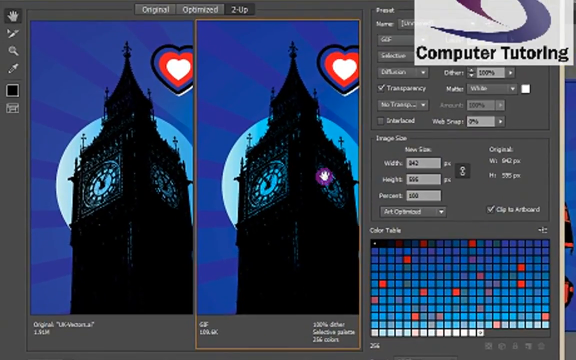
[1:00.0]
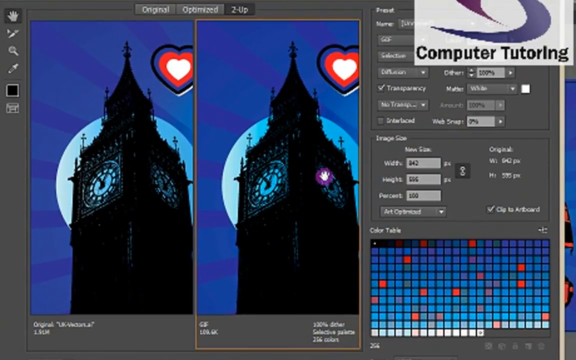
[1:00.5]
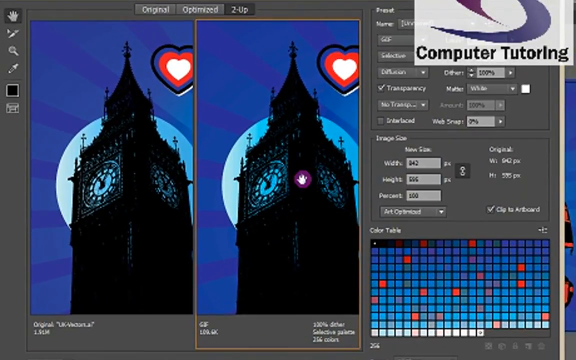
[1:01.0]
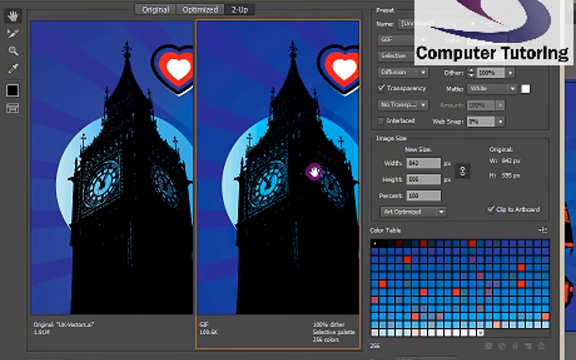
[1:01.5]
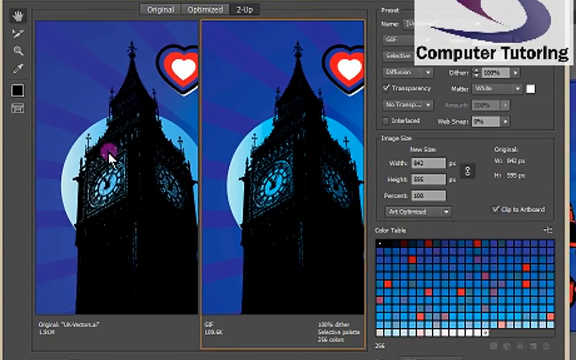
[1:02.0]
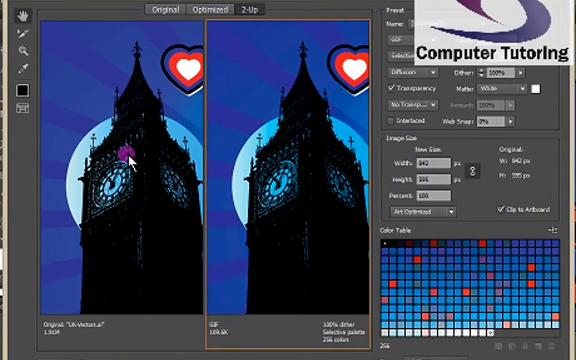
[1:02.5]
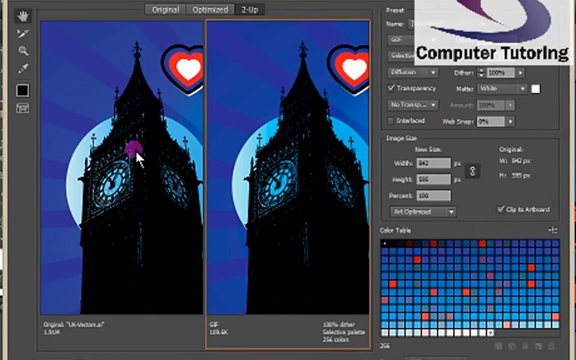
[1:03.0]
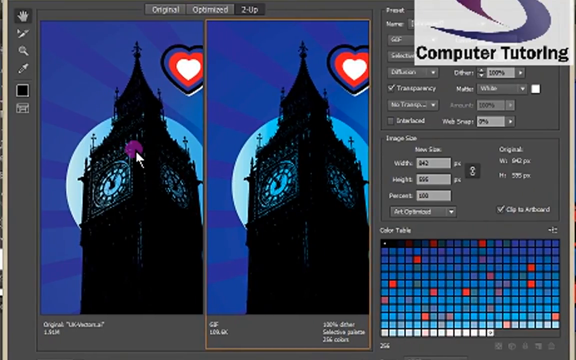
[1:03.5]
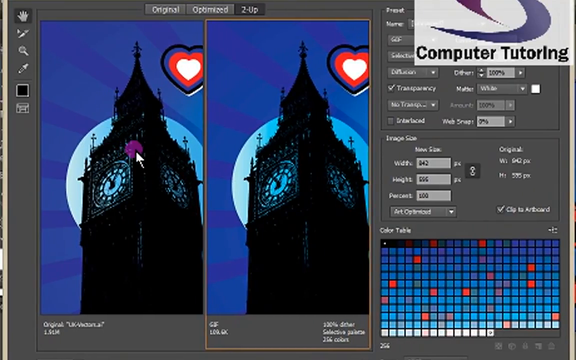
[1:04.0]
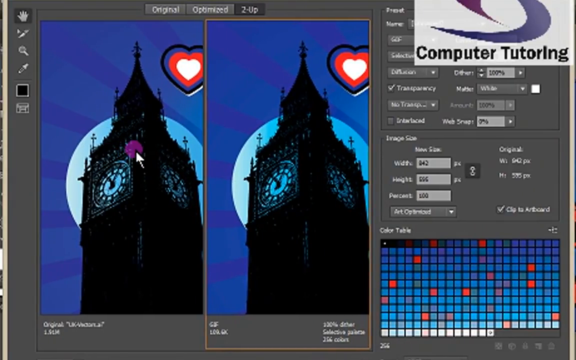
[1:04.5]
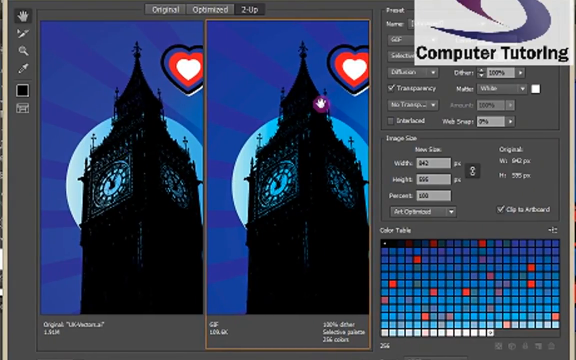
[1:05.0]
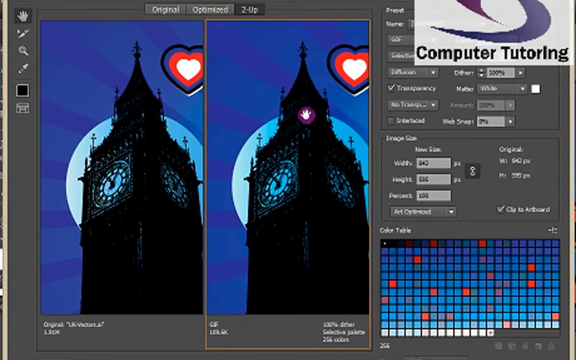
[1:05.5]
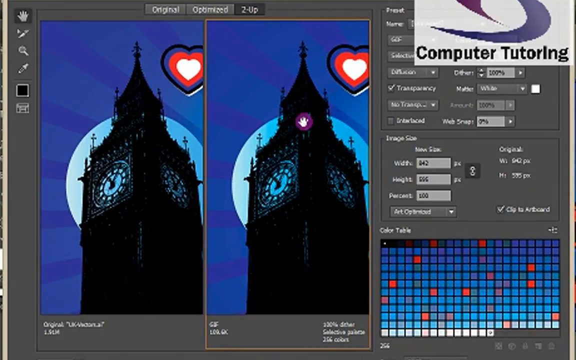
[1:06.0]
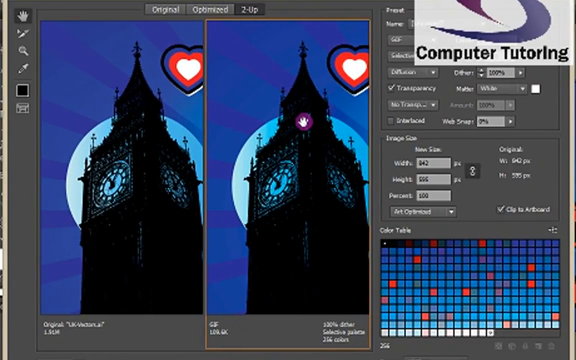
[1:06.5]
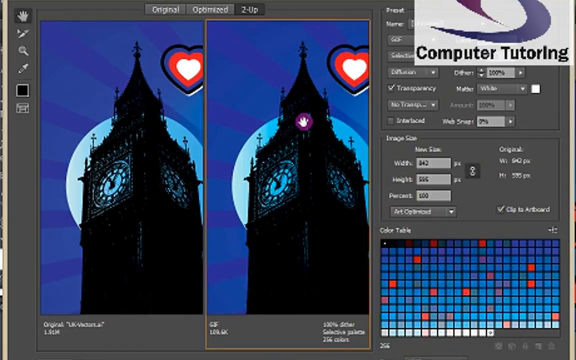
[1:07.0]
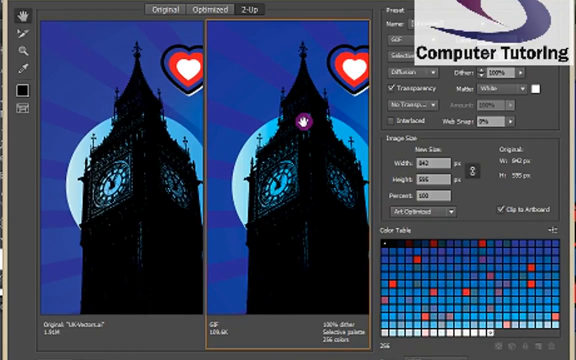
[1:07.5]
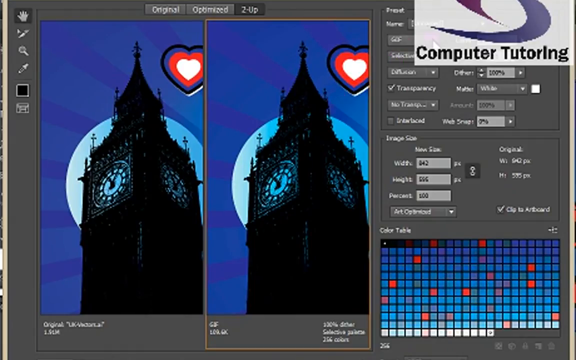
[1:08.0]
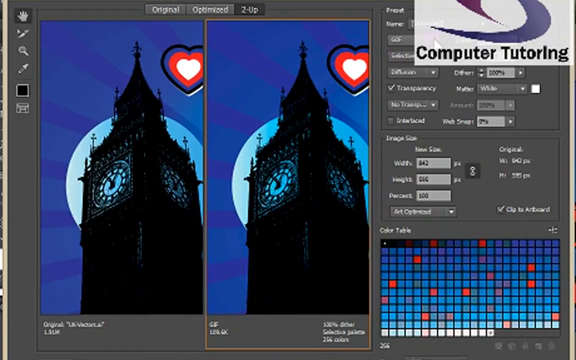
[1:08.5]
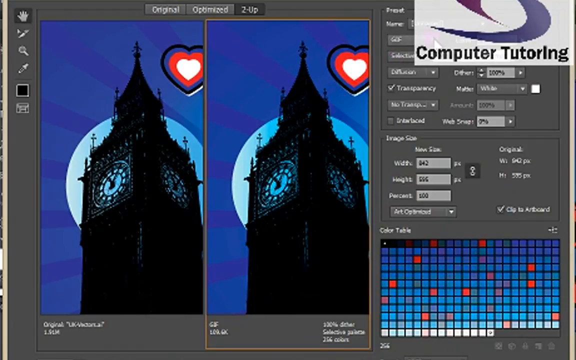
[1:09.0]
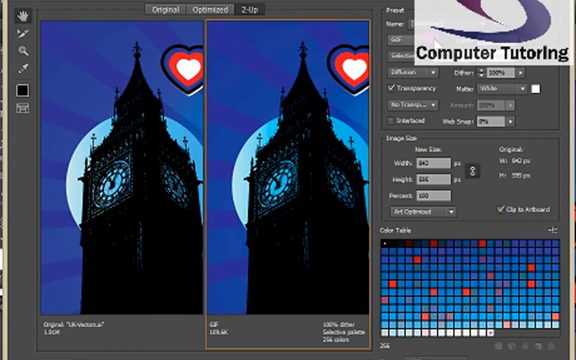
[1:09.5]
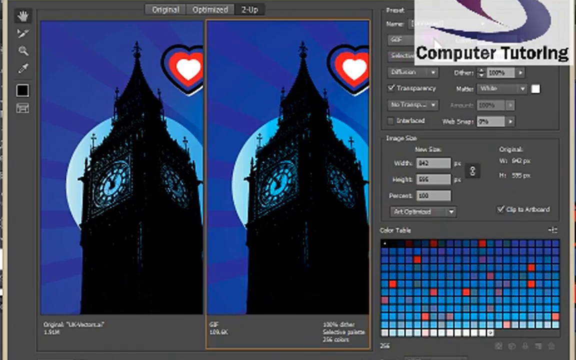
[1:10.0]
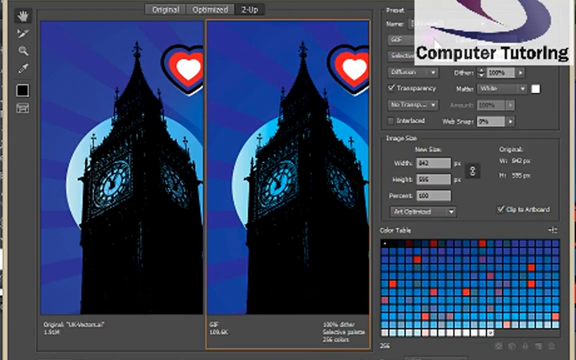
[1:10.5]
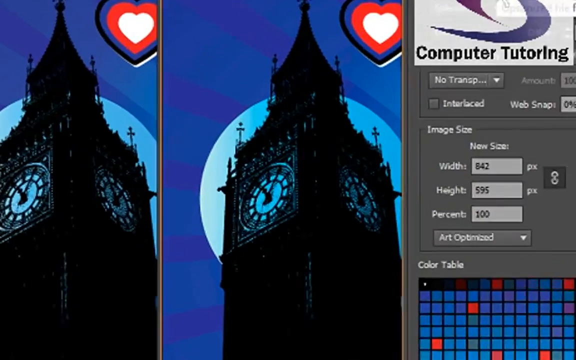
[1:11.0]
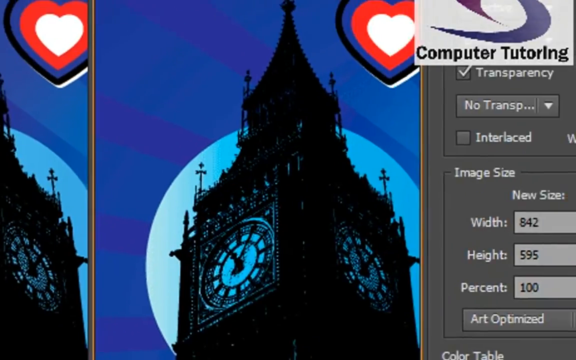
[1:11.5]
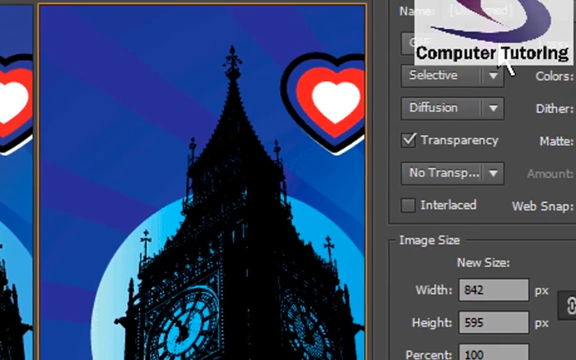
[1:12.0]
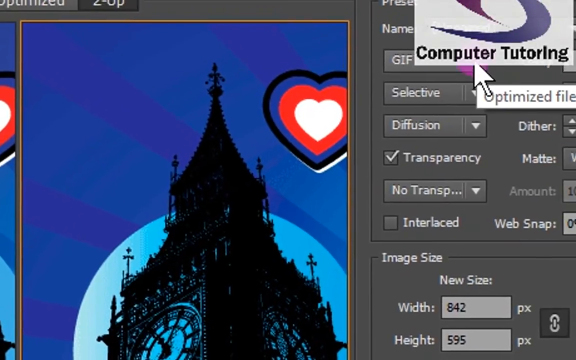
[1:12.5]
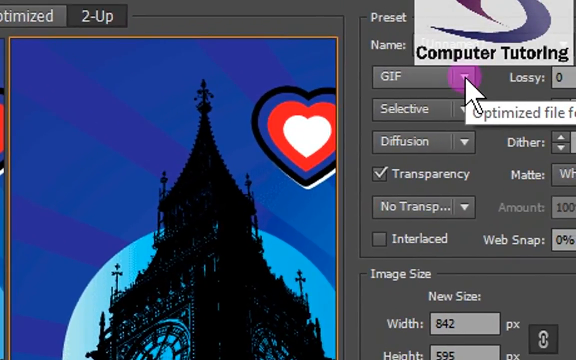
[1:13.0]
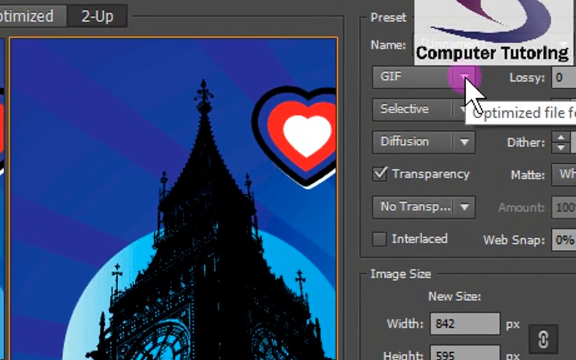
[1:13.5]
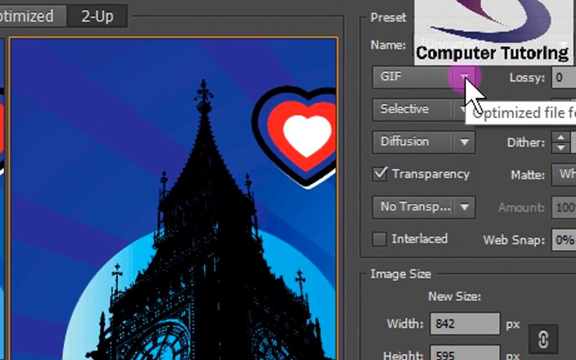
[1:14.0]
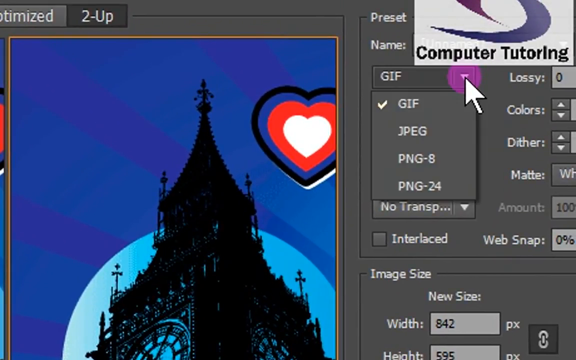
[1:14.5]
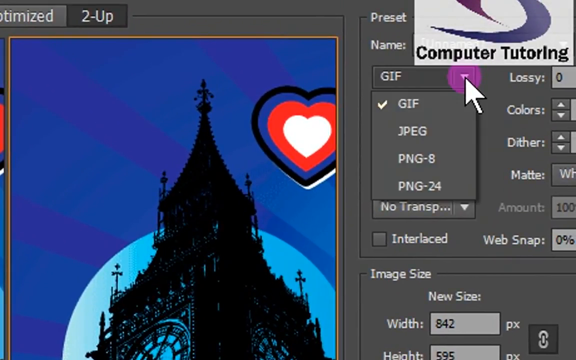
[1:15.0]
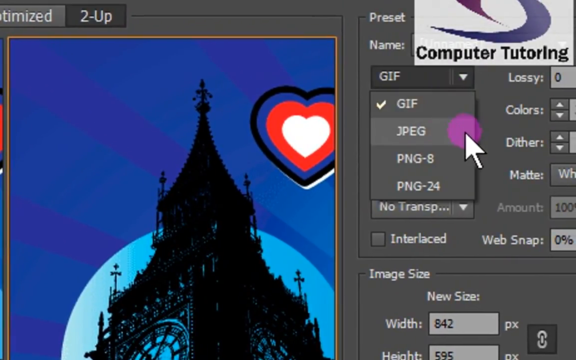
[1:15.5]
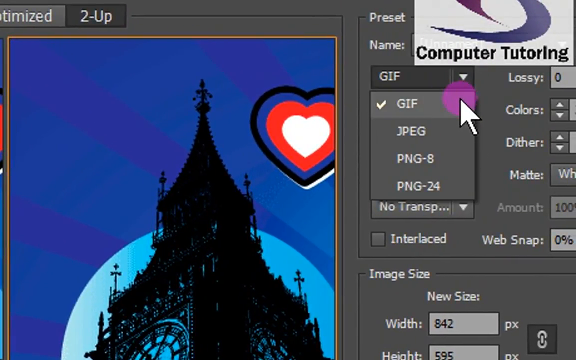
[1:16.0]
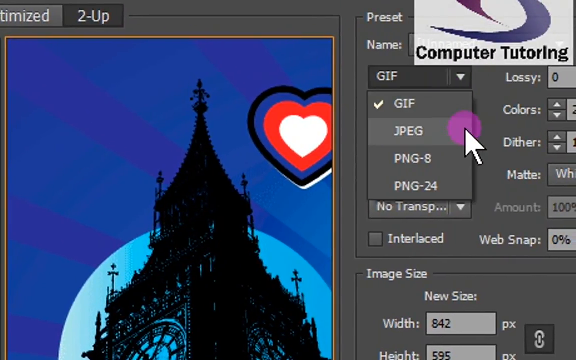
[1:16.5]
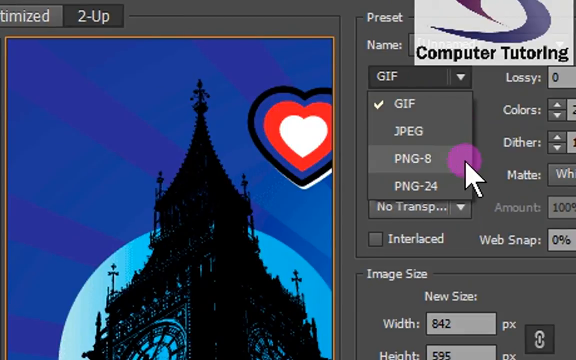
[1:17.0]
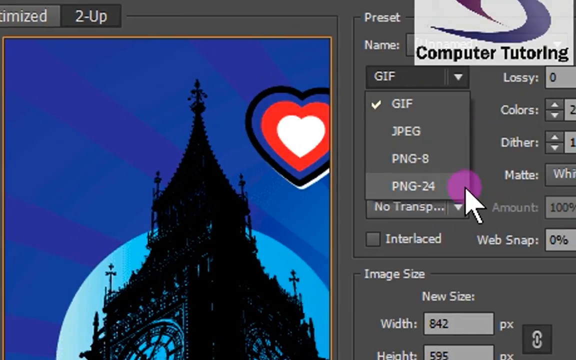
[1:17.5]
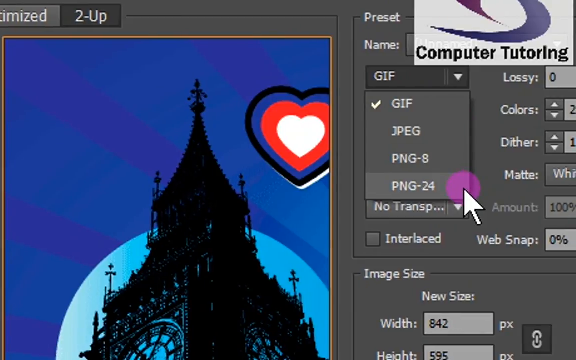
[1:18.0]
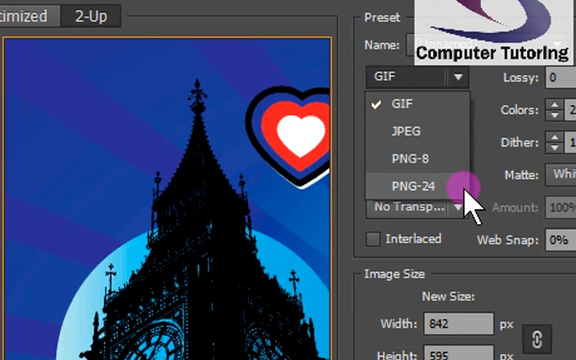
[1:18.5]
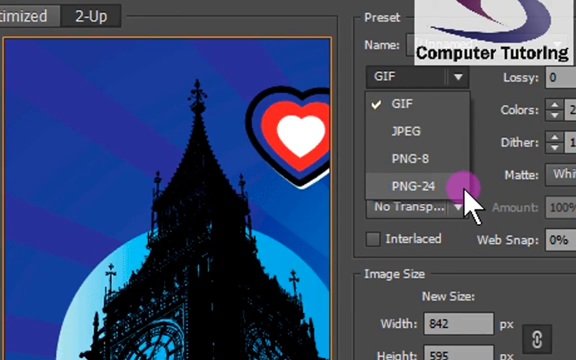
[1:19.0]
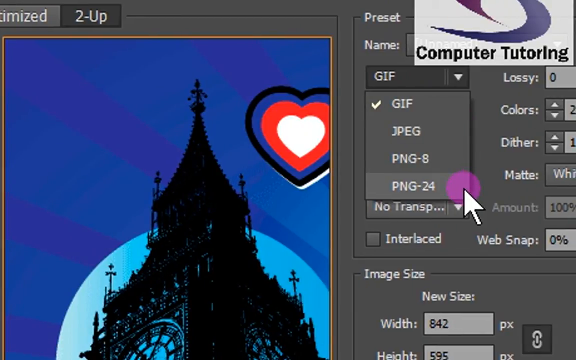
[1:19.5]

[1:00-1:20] The "computer tutoring" logo is in the right-hand corner. The person is apparently in an app within Windows where documents are saved, and shows how to take a piece of a picture. The picture has quite a few items: Big Ben, a heart, a Union Jack, four stars, a map that includes the Republic of Ireland, a bobby, a double-decker bus and a phone box. A highlighted portion containing just Big Ben has been taken, and a tab showing margin settings is displayed. The cursor, a purple dot with a hand, hovers over Big Ben. The view goes close up on "GIF", then "JPEG" and "PNG 24", which they seem about to select, and then goes back to the Big Ben image.